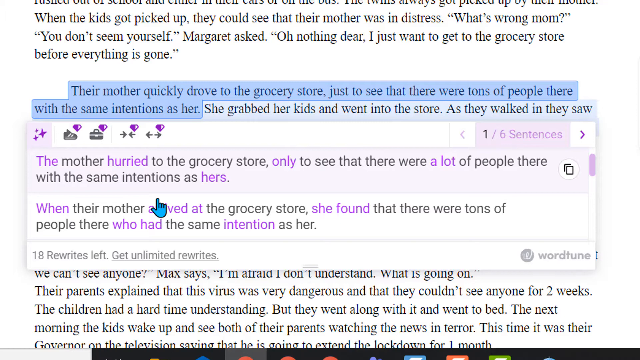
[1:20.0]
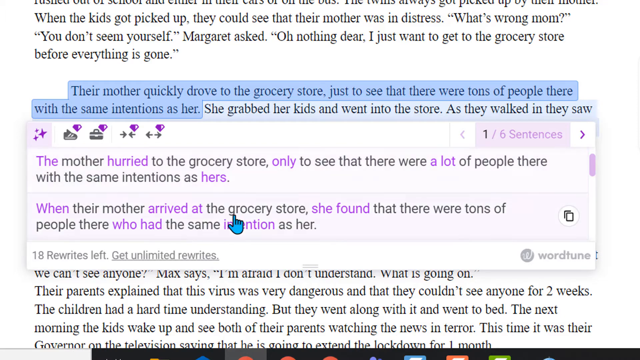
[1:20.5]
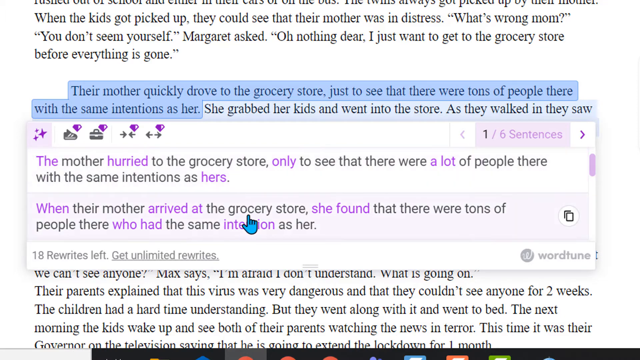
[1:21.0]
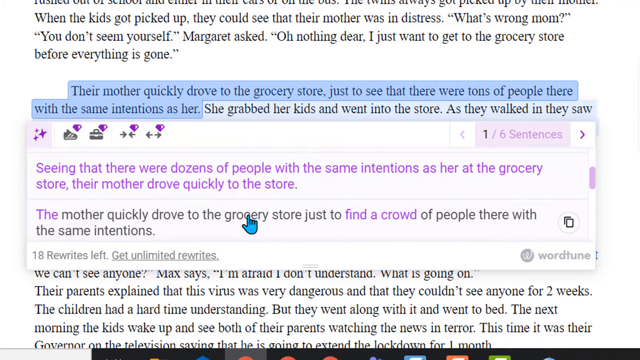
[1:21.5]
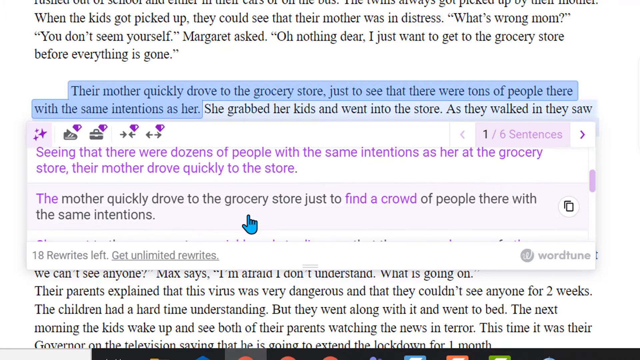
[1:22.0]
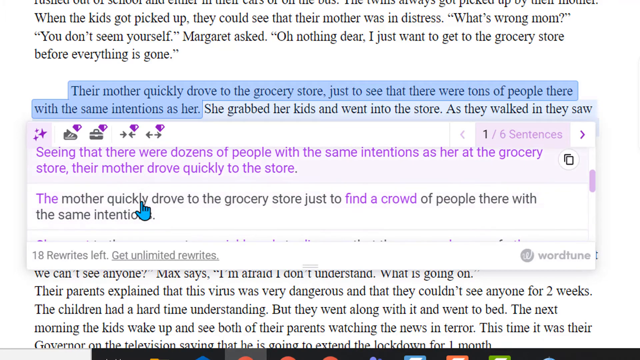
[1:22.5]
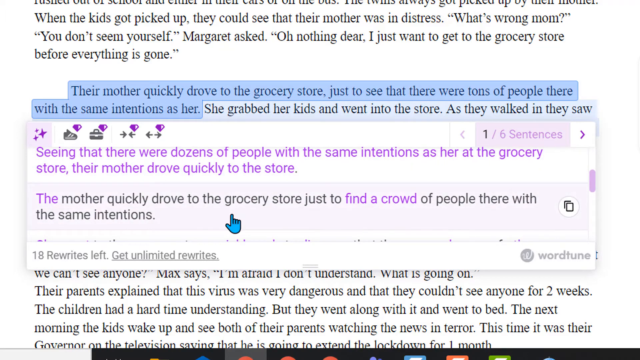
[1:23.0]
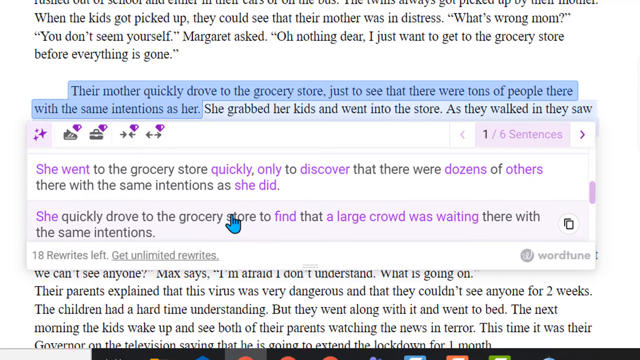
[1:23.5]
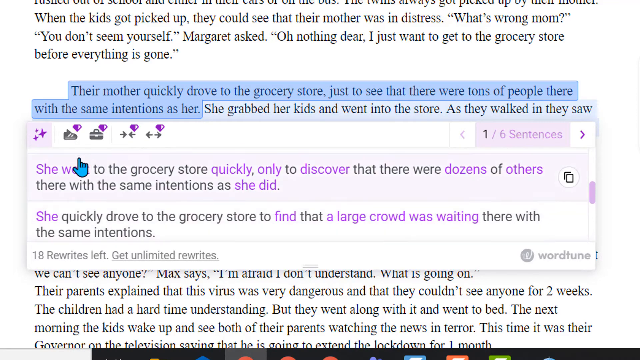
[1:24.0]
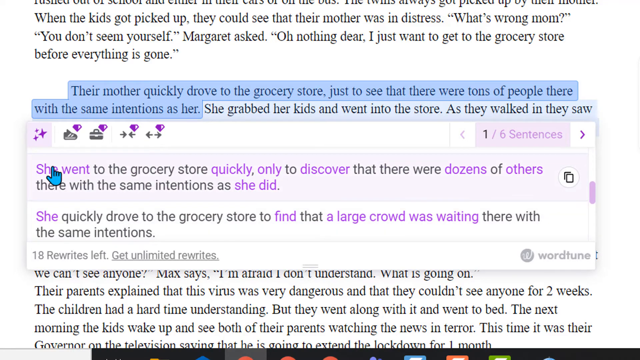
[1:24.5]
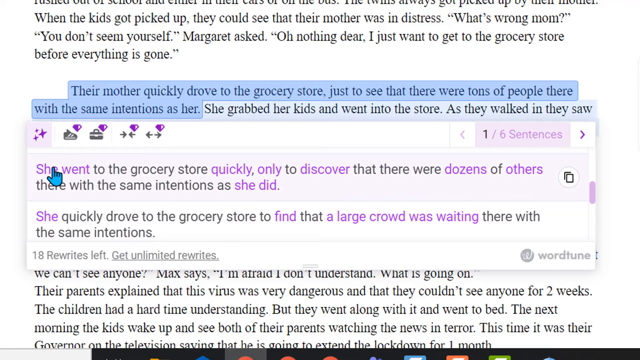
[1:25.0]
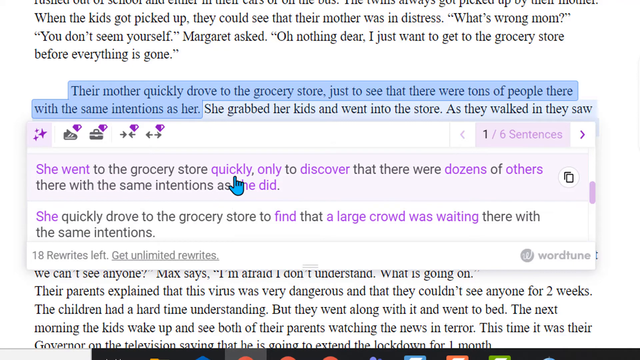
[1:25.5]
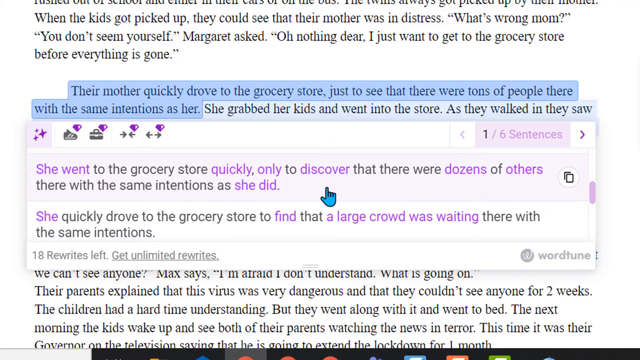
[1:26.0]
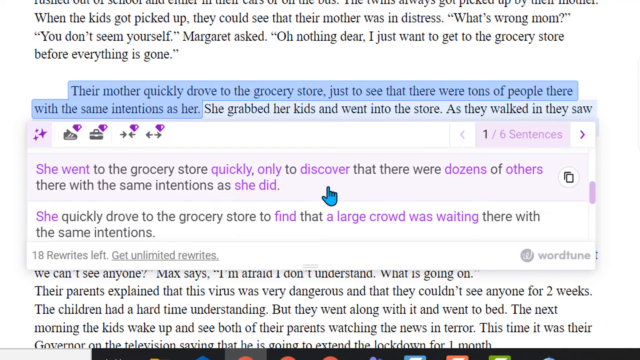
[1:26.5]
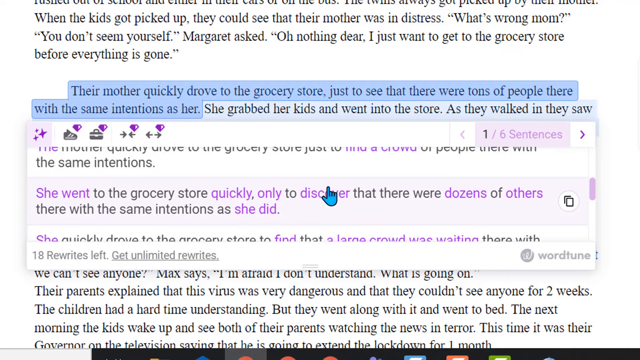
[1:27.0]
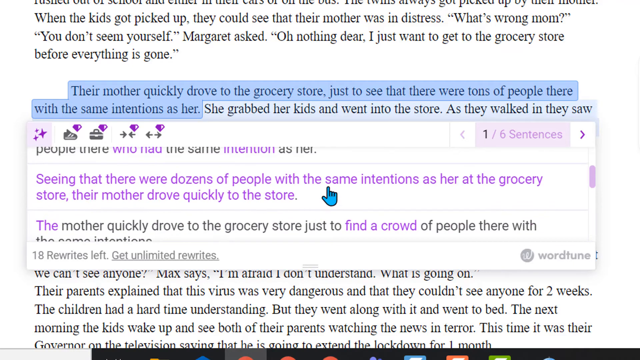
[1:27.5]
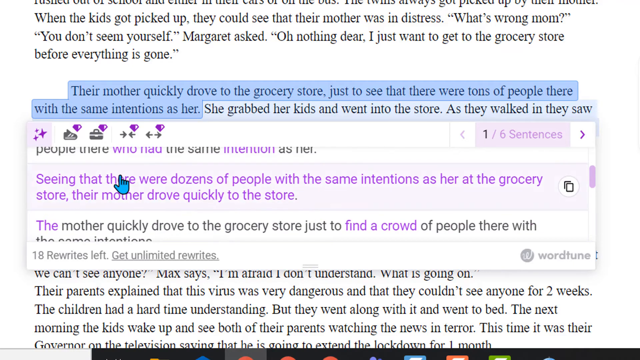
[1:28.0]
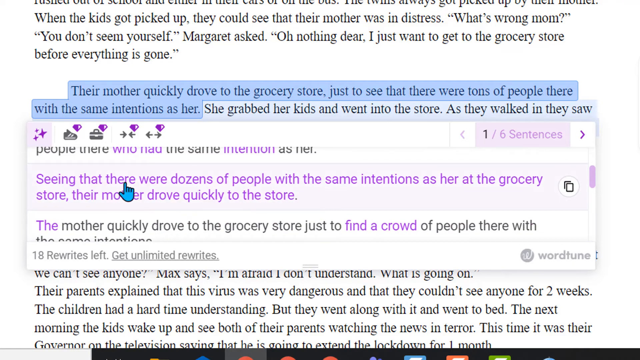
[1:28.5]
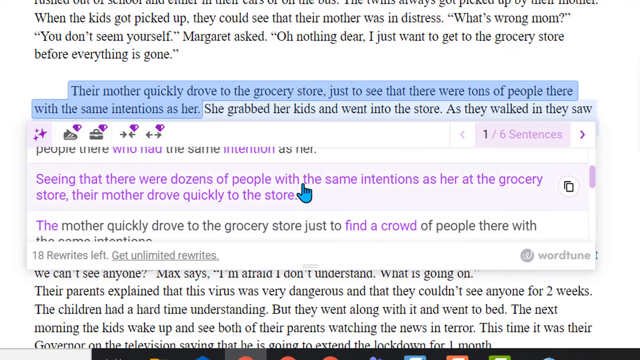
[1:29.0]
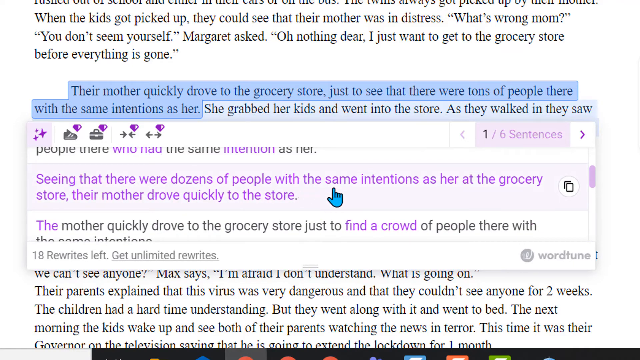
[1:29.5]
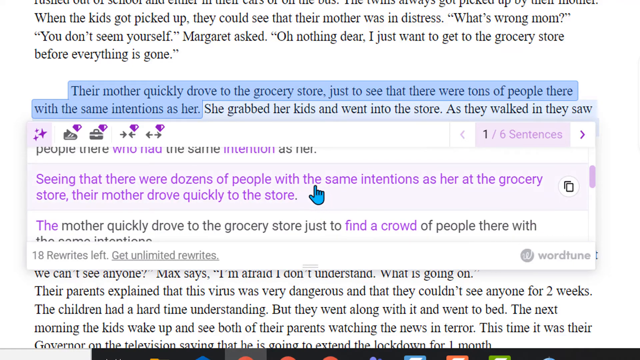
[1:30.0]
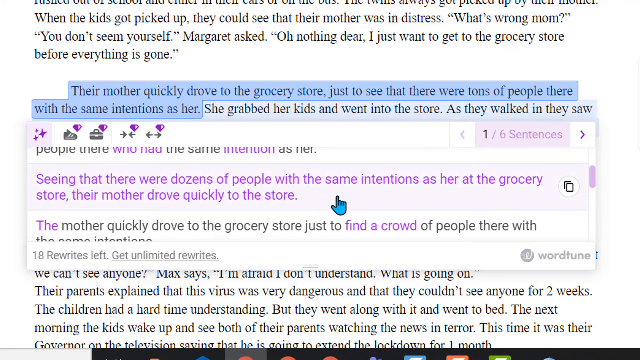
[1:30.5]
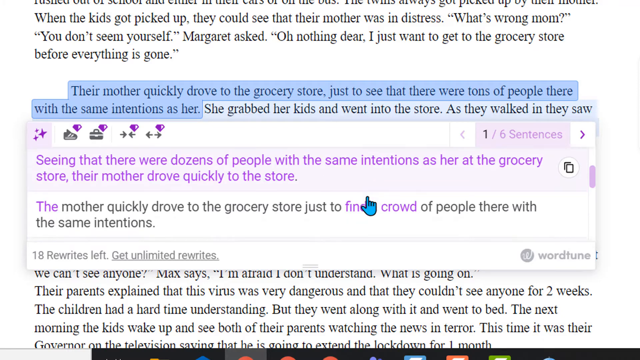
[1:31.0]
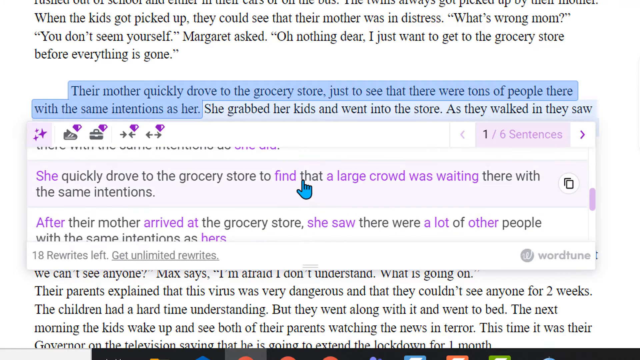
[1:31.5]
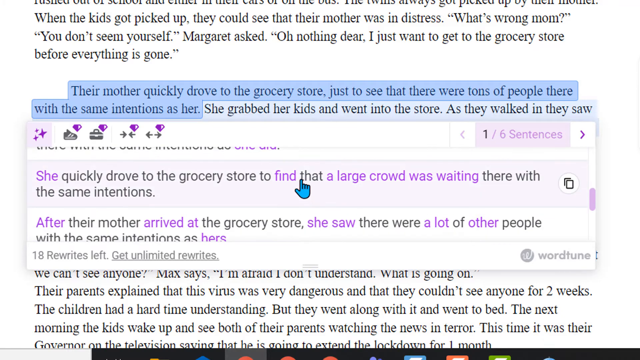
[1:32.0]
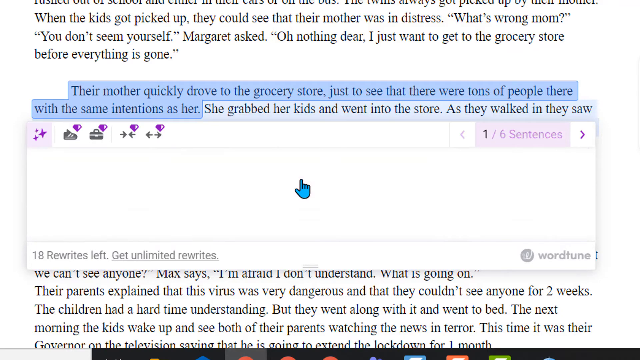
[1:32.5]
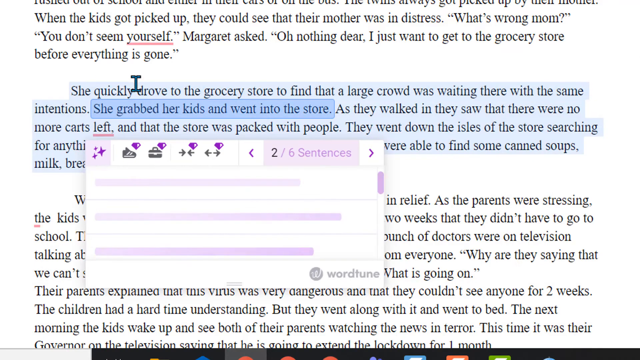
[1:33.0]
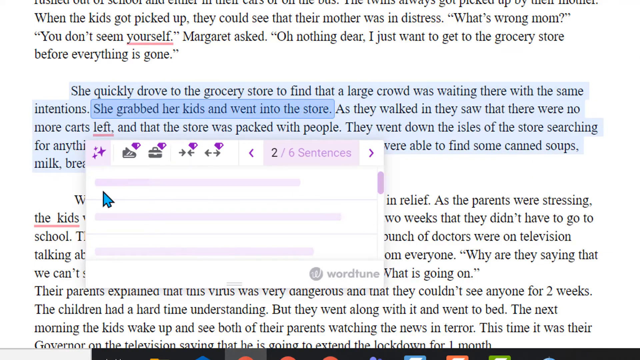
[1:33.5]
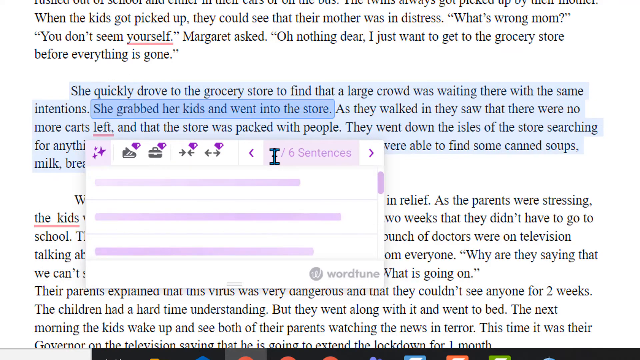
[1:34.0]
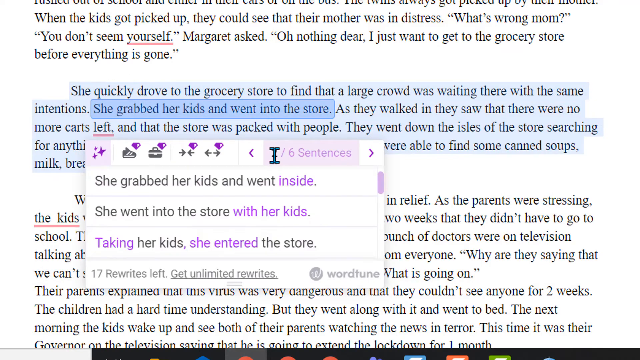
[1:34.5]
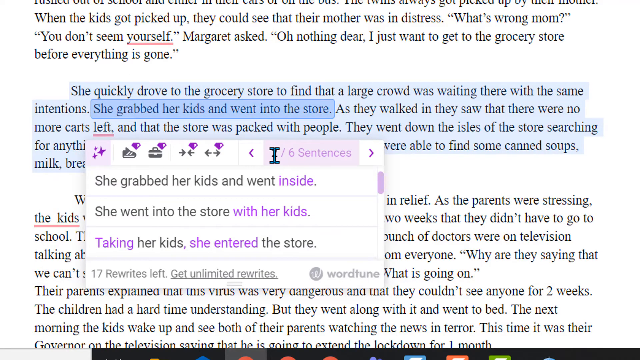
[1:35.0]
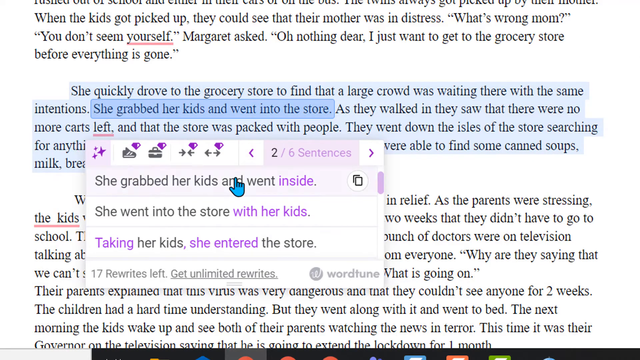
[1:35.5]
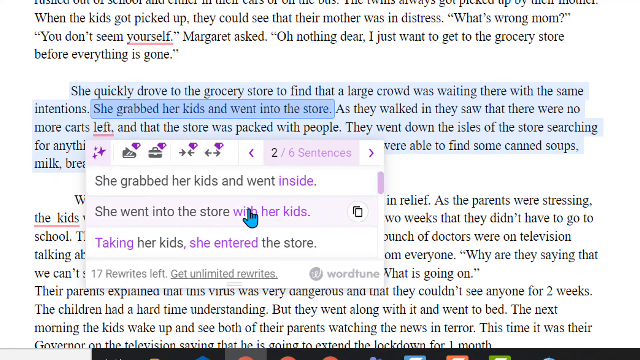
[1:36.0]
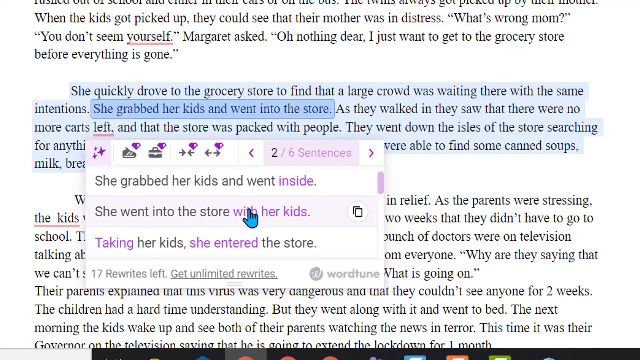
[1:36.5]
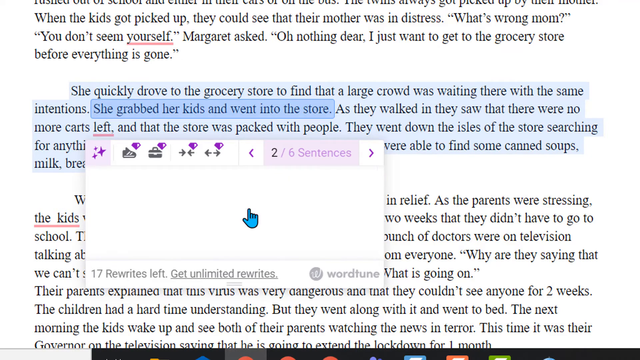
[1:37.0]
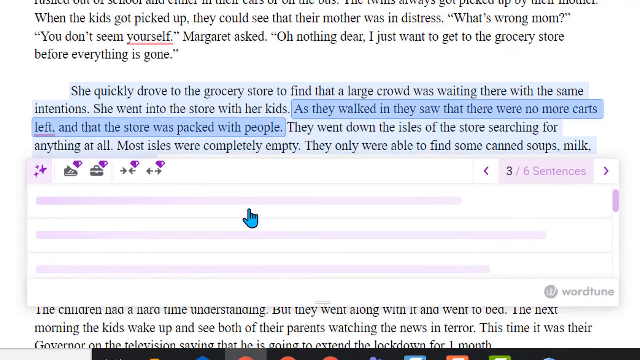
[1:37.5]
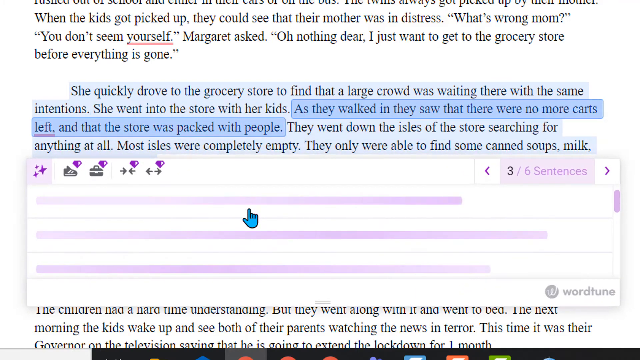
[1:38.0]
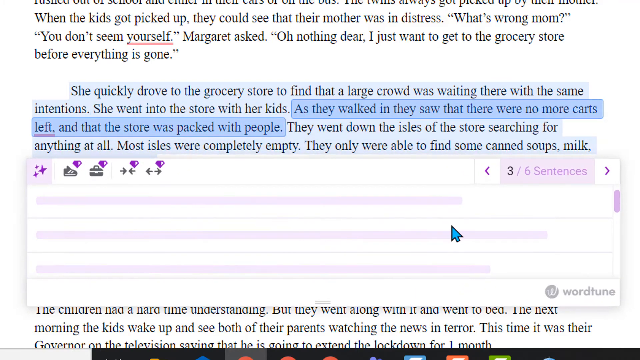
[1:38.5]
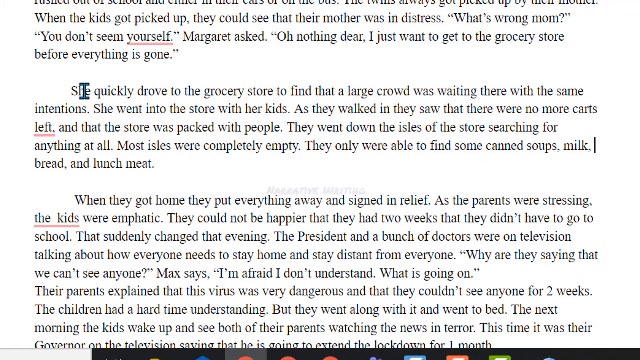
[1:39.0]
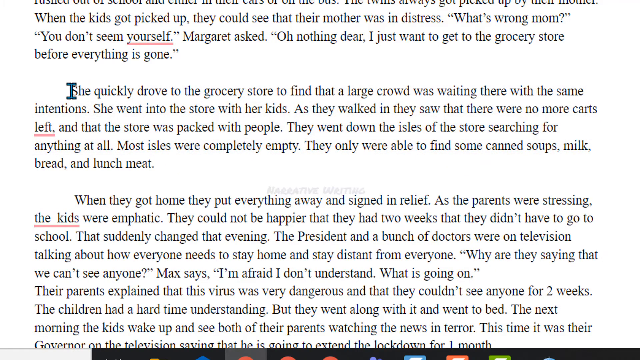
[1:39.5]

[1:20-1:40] A narrative assignment in separate paragraphs is shown. A section of a paragraph is highlighted in blue, with suggested edits shown underneath it in a separate box from the document. The user scrolls up and down and moves the cursor along the different proposed edits, then selects one, and the text changes before the application moves on to the next sentence with a proposed edit. The box has a counter stating one out of six sentences are currently in view, apparently meaning that the next edit is shown as each one is made or ignored. The original text is black on a white background, while the edits use a colored background and colored text to mark the changes.